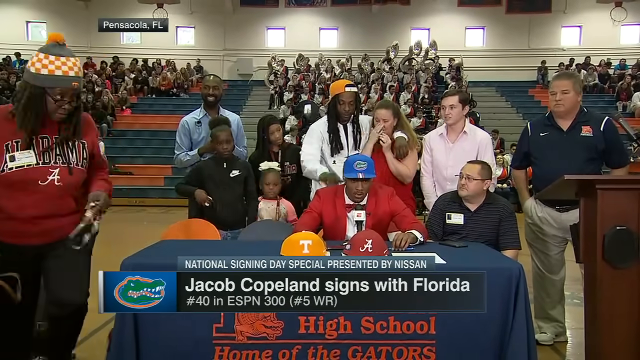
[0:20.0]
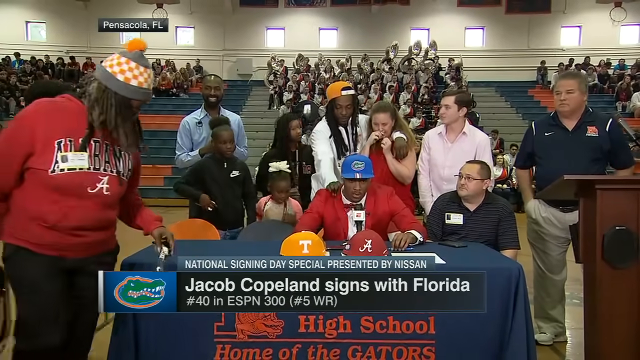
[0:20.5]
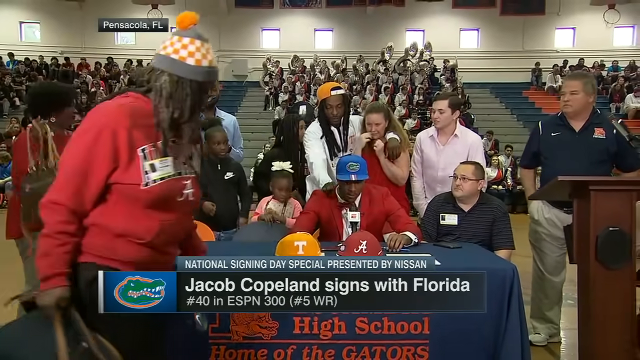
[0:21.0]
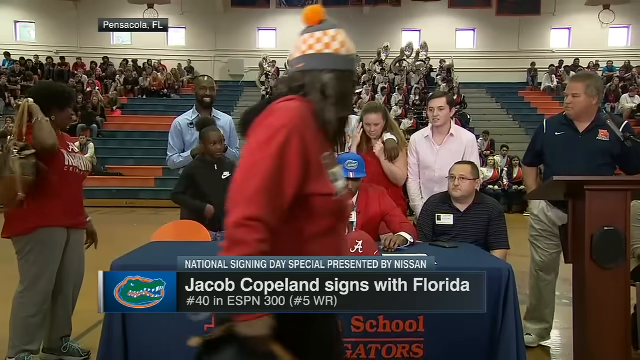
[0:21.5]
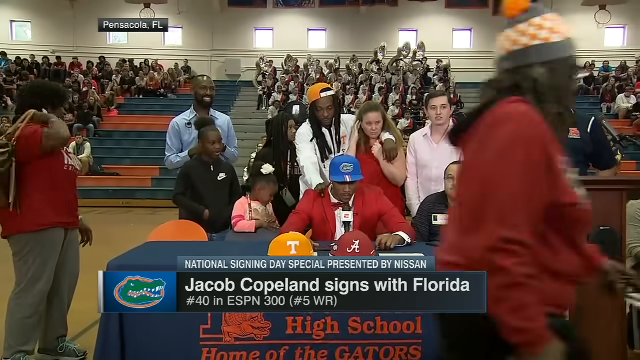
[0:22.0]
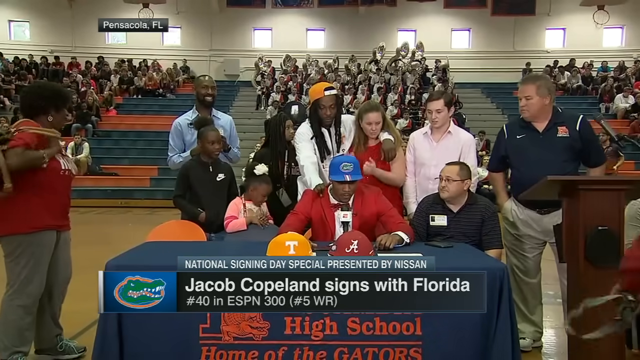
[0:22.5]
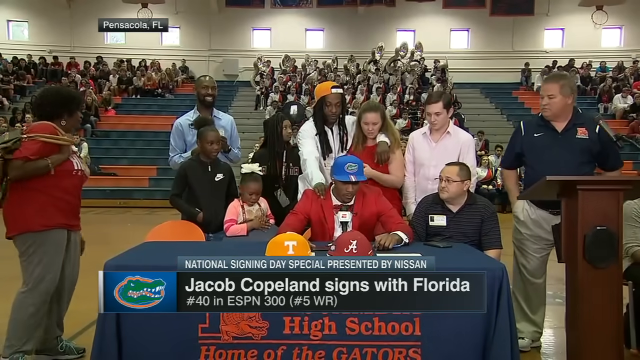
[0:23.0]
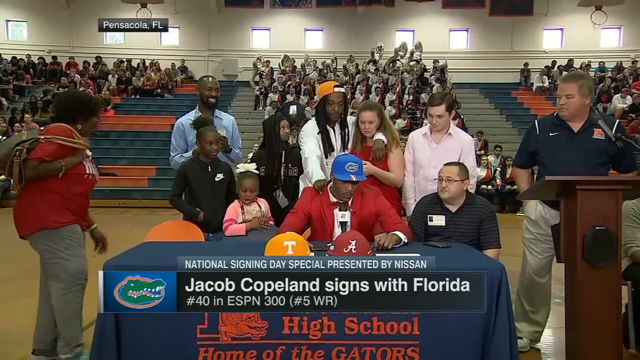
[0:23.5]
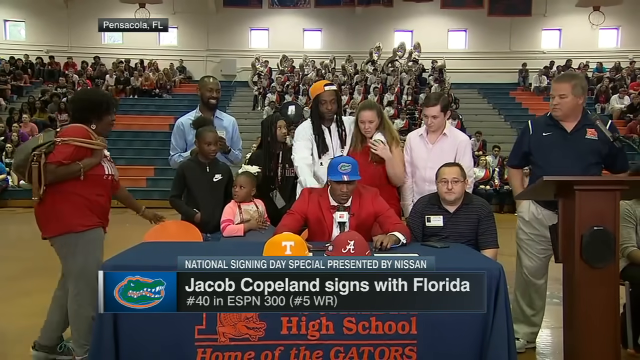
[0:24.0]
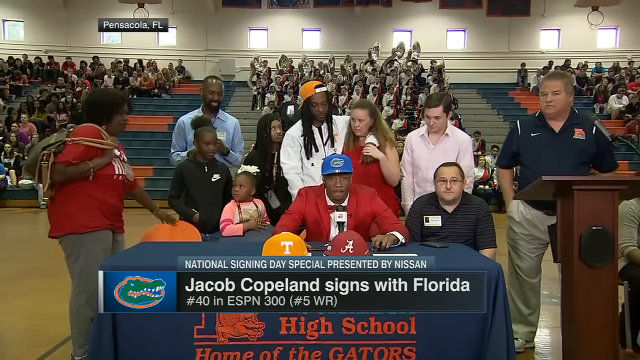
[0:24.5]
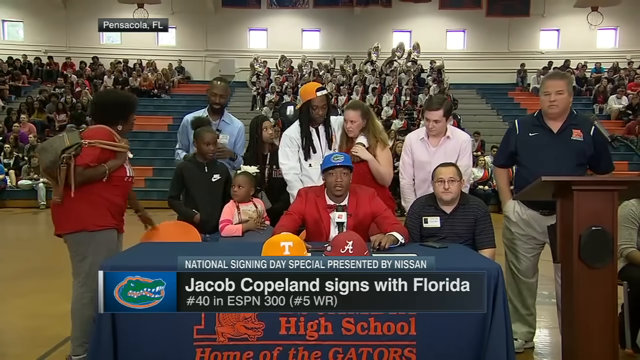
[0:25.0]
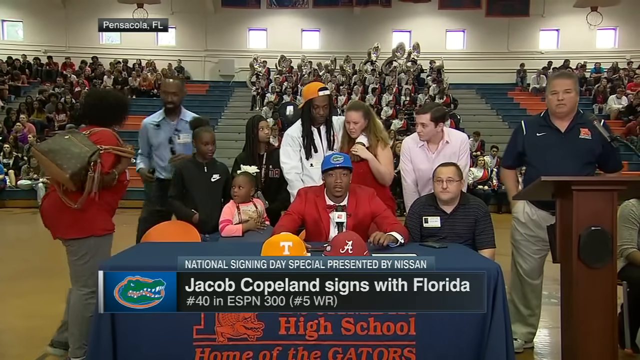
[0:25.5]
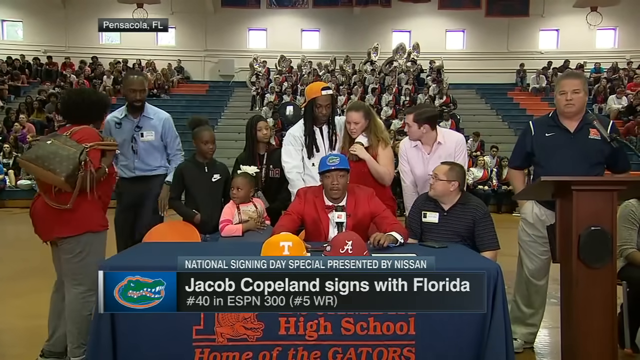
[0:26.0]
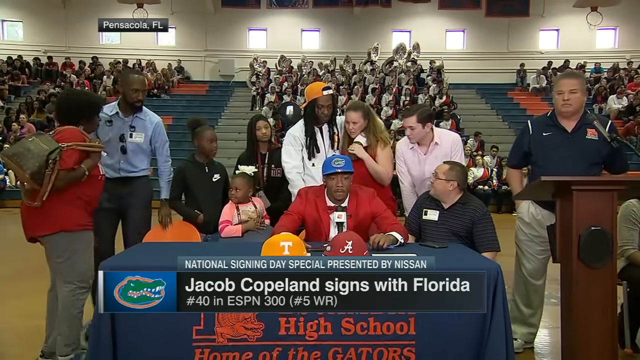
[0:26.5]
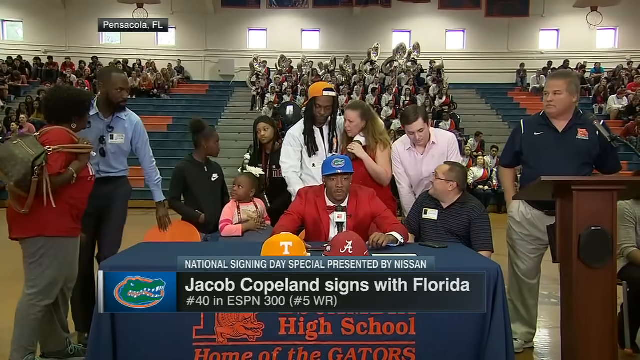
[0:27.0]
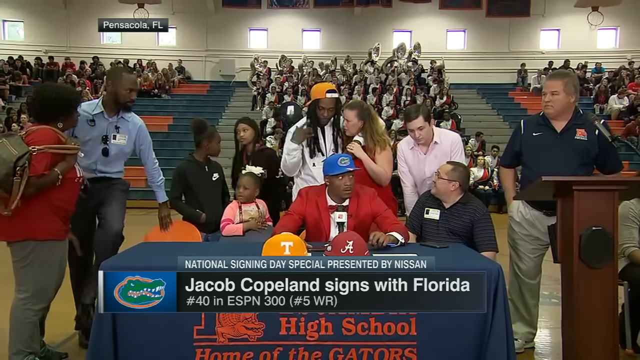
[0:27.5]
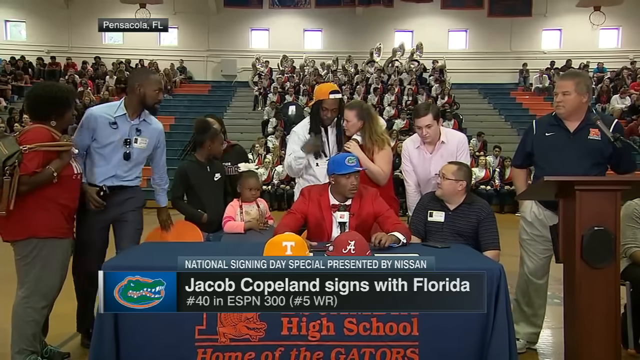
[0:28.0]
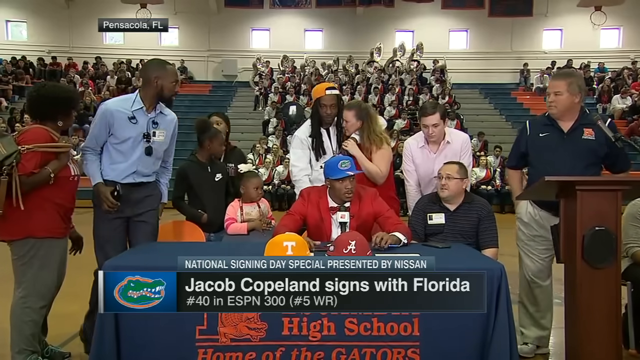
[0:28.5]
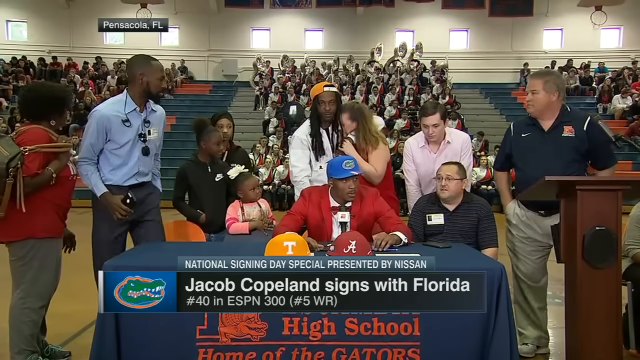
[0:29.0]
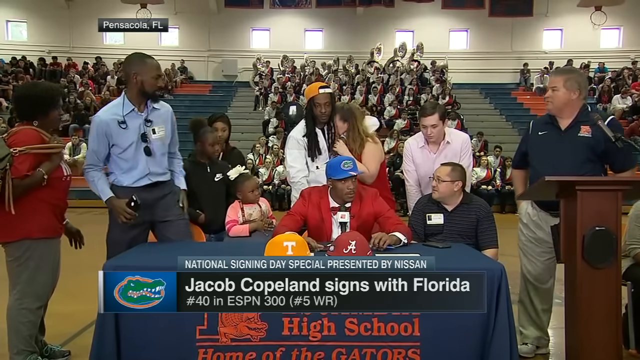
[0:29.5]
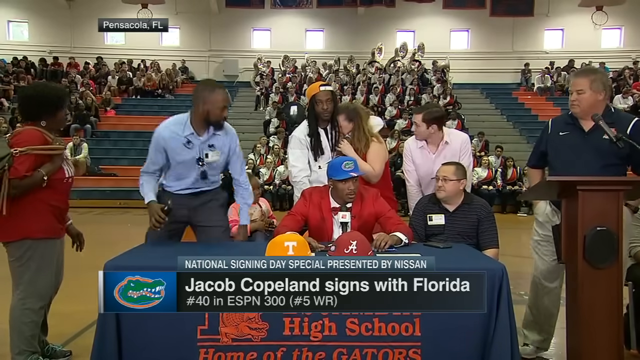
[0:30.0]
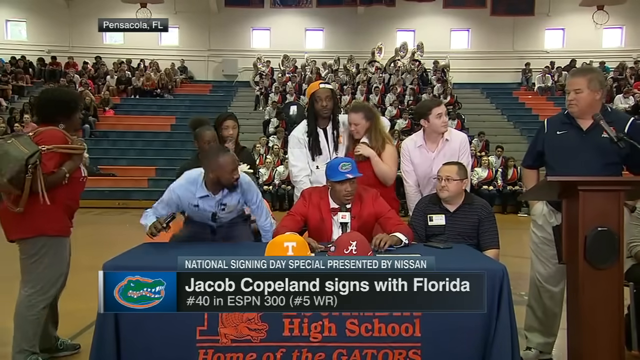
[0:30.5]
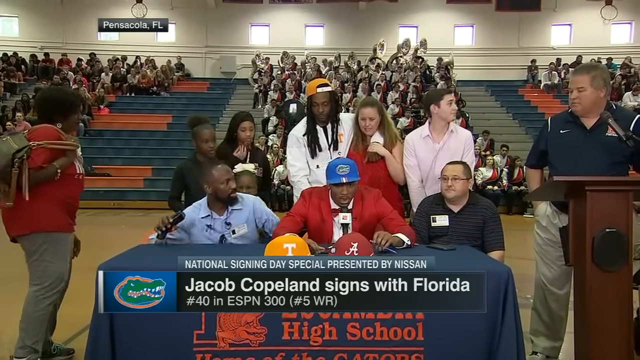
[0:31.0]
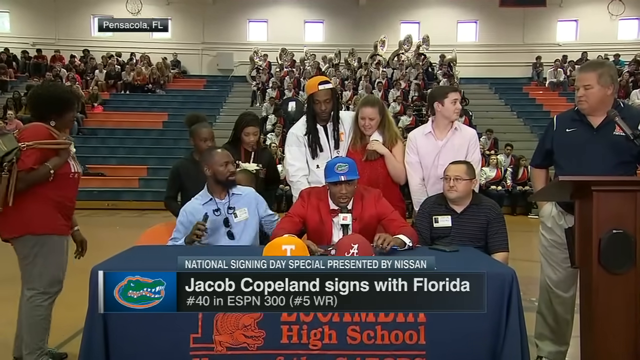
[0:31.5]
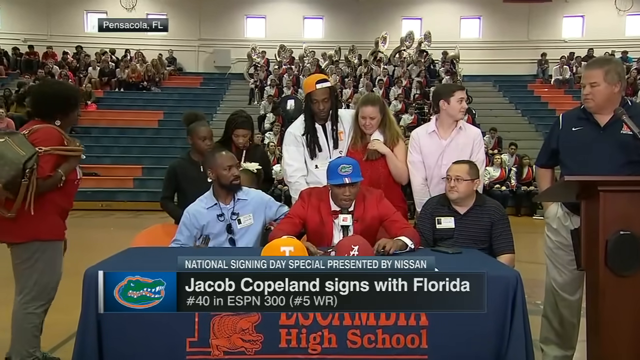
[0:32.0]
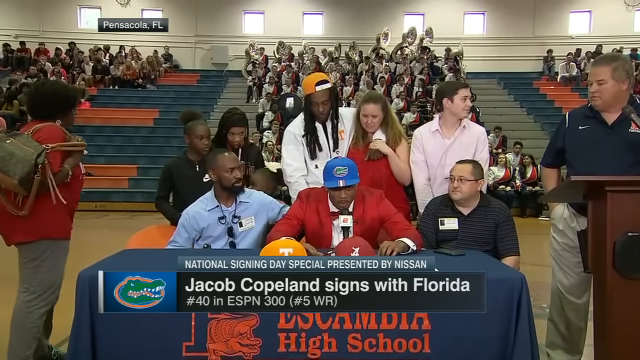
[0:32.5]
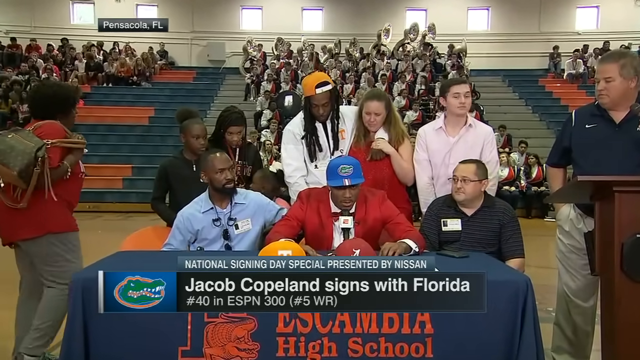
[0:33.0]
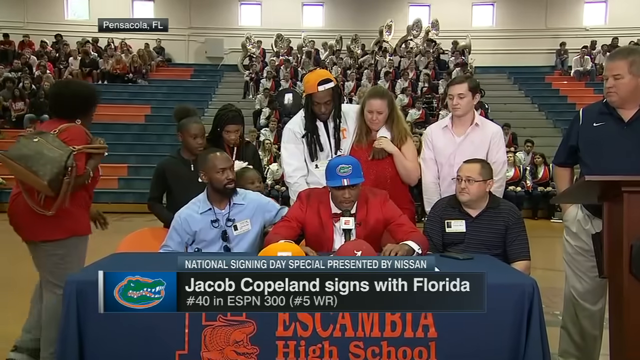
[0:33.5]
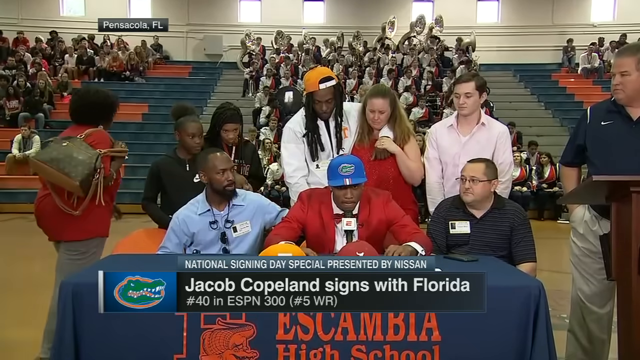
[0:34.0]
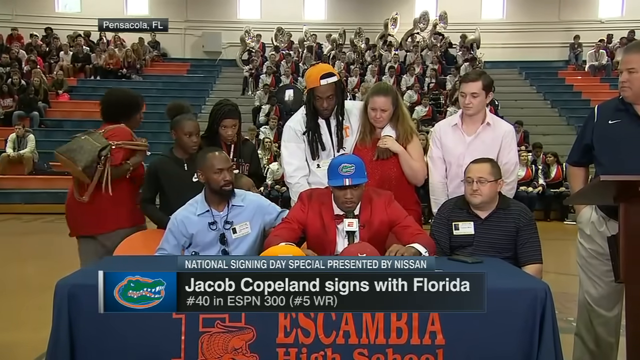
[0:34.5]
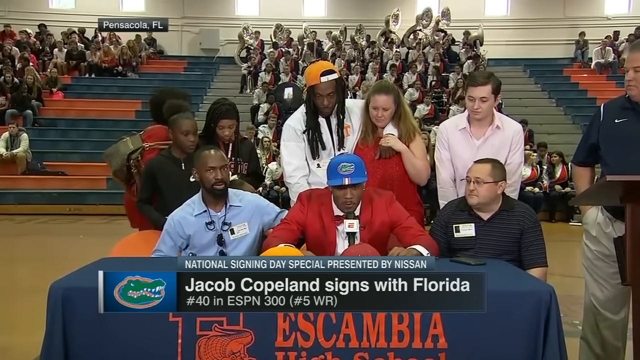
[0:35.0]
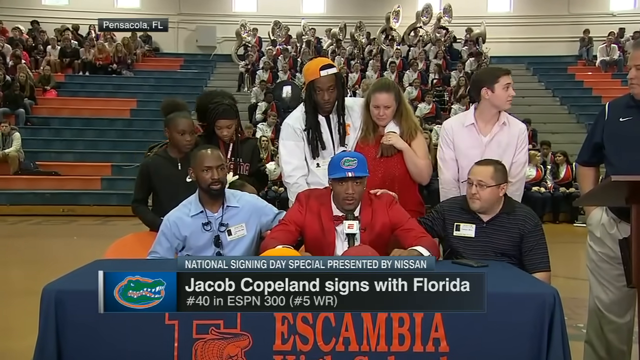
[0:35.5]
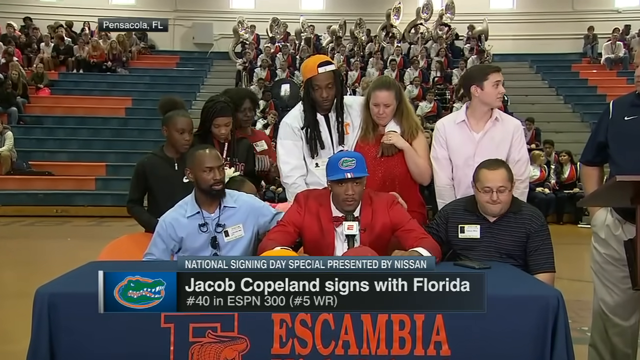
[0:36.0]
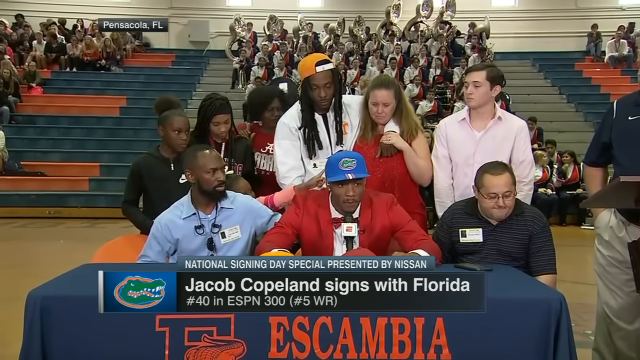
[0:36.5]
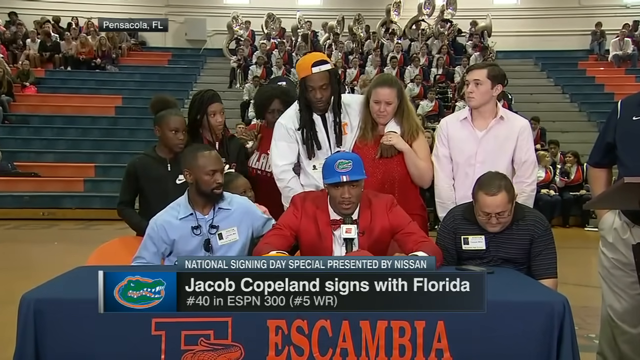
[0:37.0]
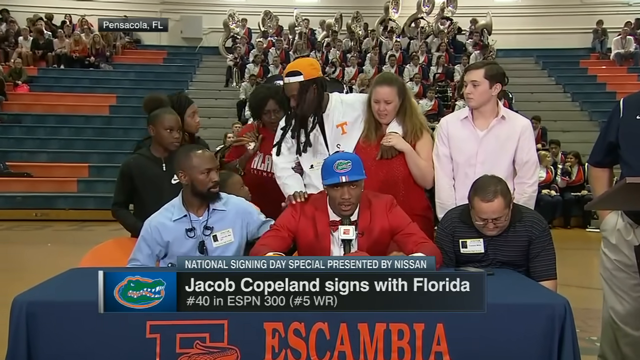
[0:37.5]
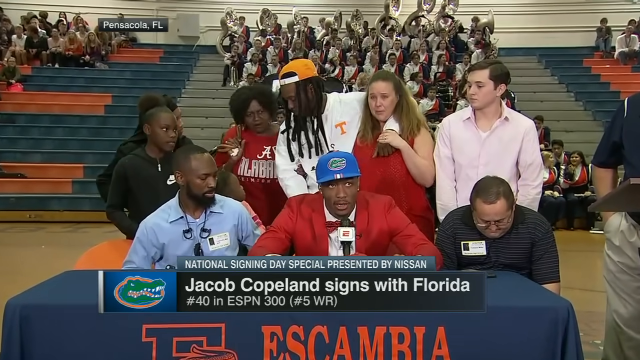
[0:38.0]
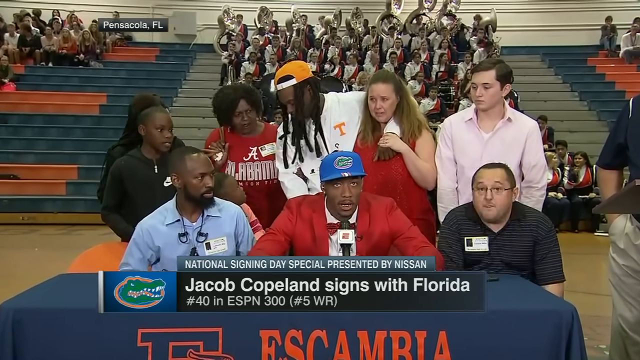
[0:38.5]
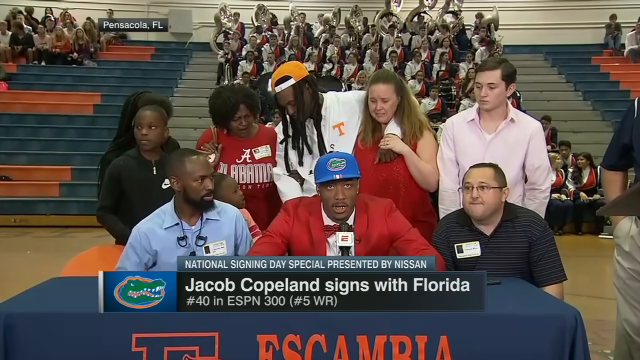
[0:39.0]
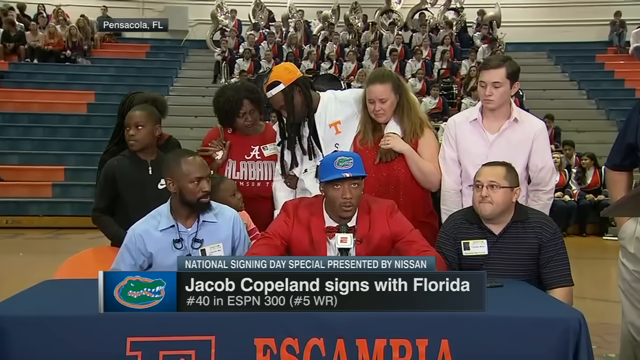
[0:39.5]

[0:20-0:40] Jubilant people stand around Jacob Copeland, who has just announced that he will attend the University of Florida. The people around him wear different colored shirts. A middle-aged woman wears a beanie in Tennessee colors and an Alabama sweatshirt, possibly indicating that family members did not know which school he would choose. The woman casually walks off the screen. The people around him are very excited and happy, and Copeland continues to talk into the microphone. At one point, a man in a blue button-down shirt sits down to Copeland's right (the viewer's left), and another man sitting to his left (the viewer's right), wearing a polo shirt and glasses, puts his arm on Copeland's shoulders in a comforting manner. At the far right of the screen is a wood-style podium. The auditorium is relatively full, with a large marching band toward the back center and people toward the back of the bleachers on both the viewer's left and right.